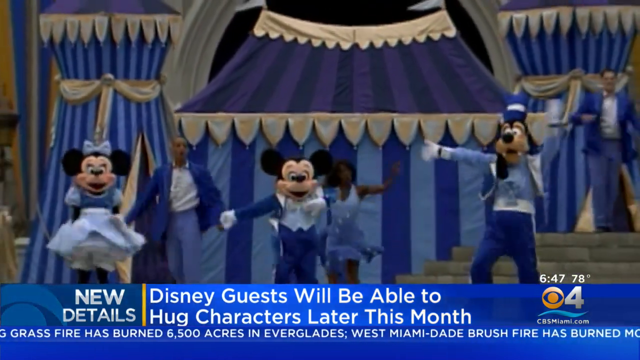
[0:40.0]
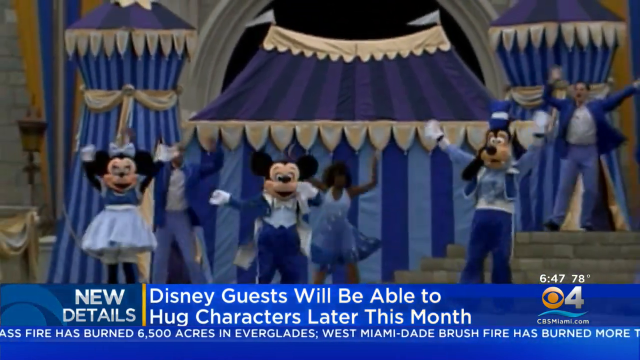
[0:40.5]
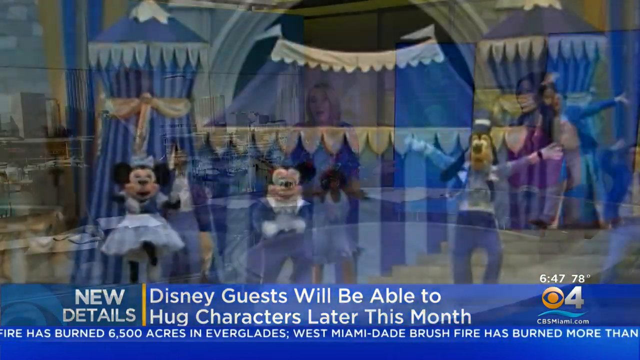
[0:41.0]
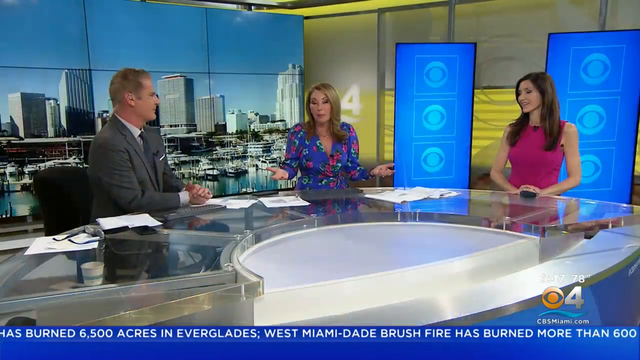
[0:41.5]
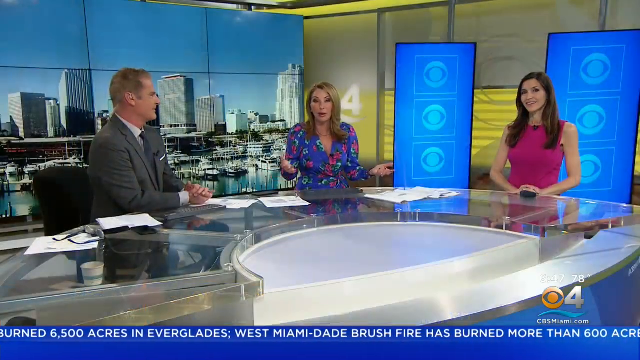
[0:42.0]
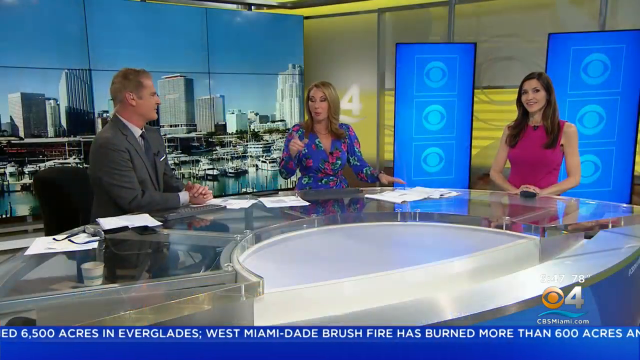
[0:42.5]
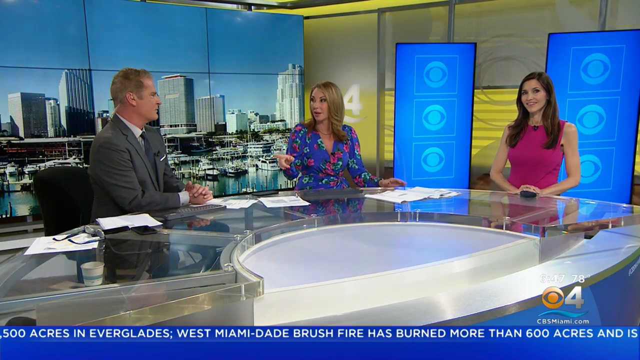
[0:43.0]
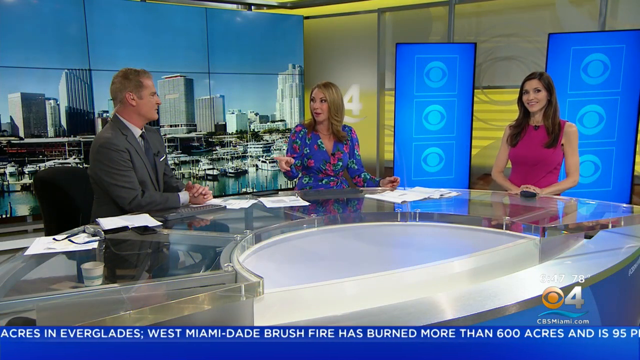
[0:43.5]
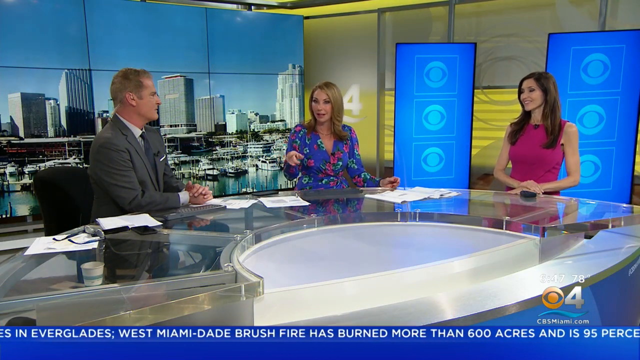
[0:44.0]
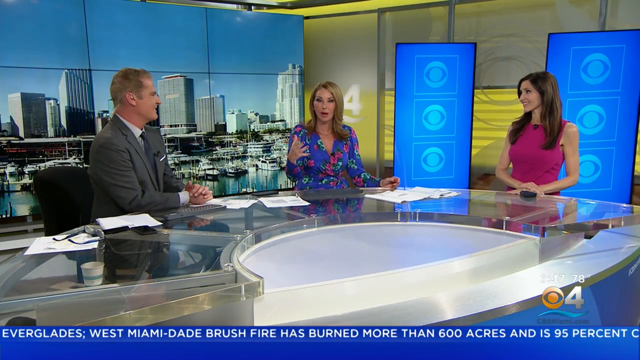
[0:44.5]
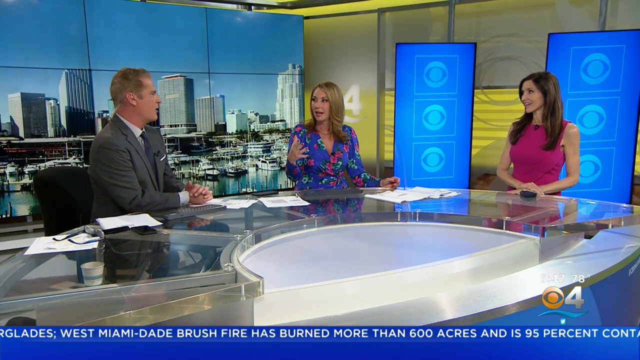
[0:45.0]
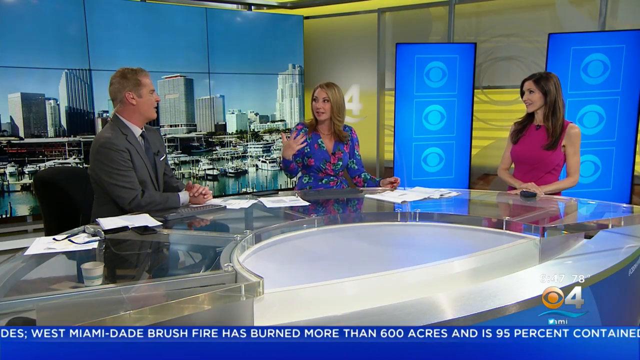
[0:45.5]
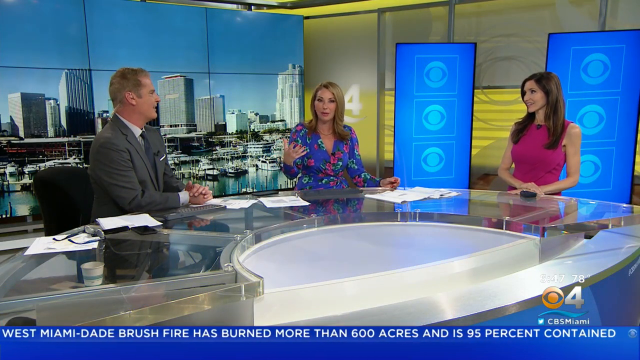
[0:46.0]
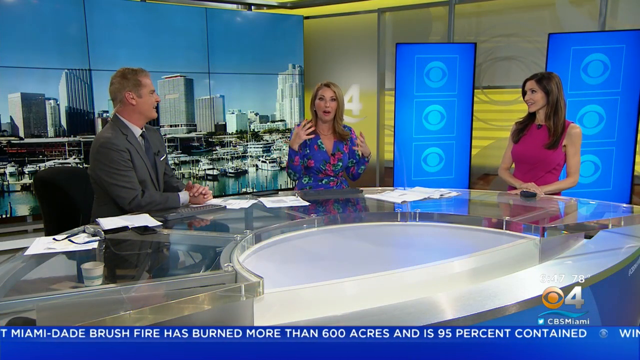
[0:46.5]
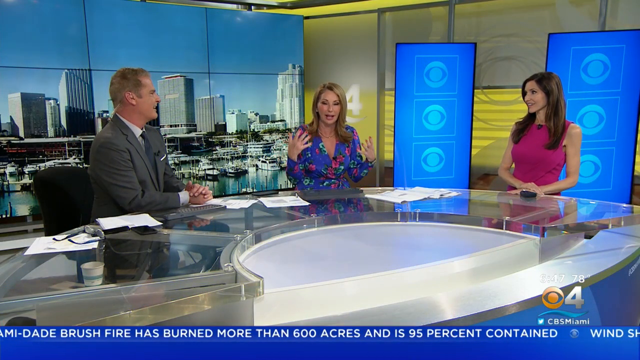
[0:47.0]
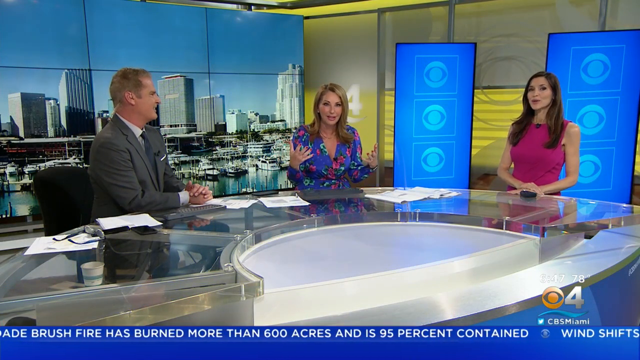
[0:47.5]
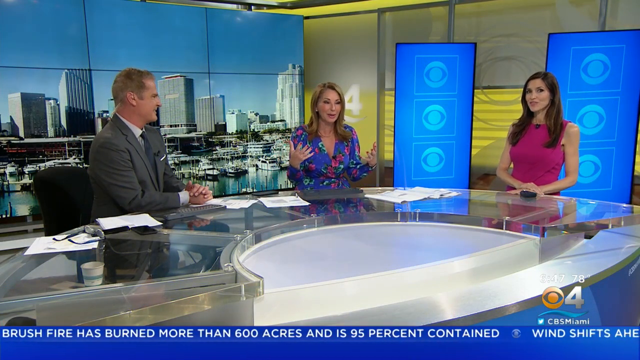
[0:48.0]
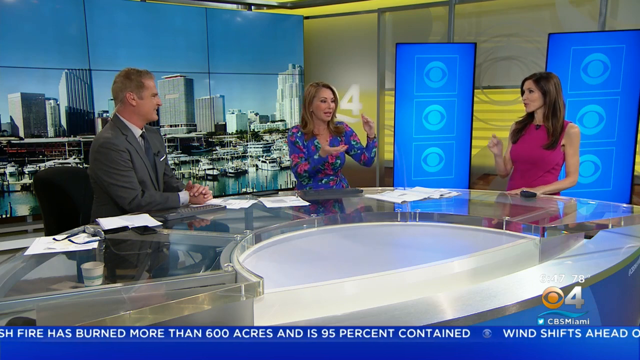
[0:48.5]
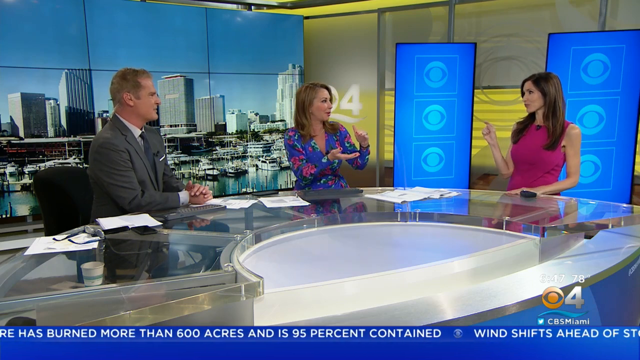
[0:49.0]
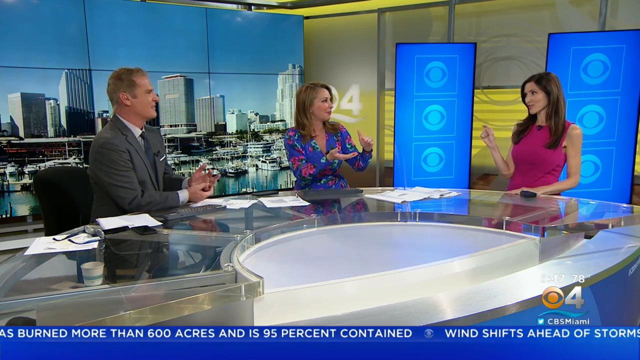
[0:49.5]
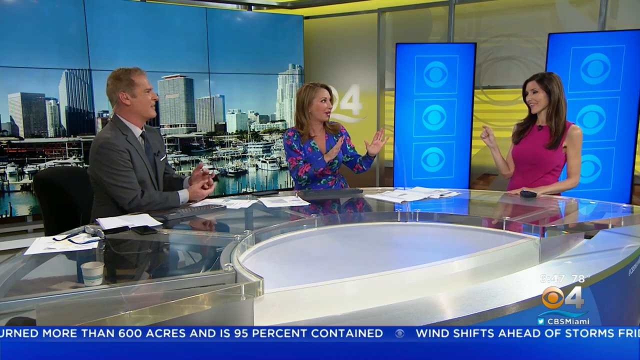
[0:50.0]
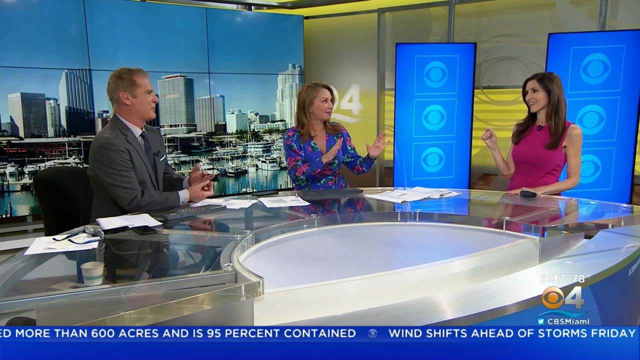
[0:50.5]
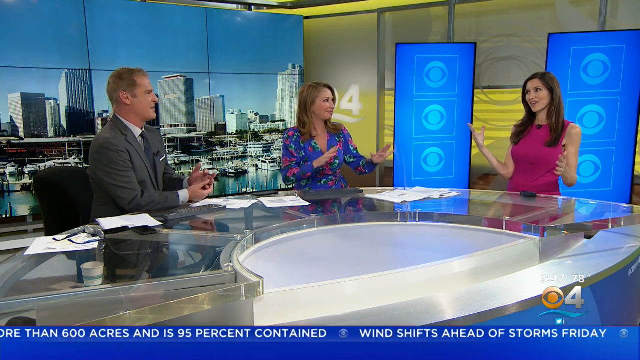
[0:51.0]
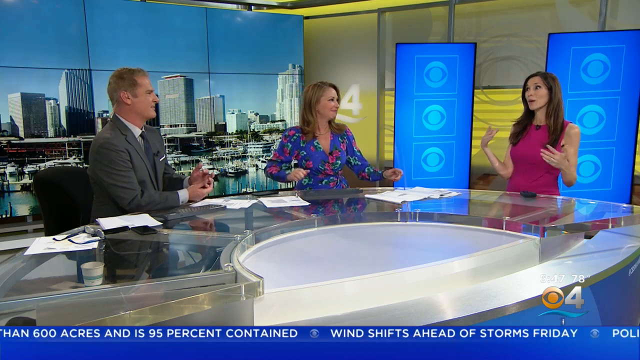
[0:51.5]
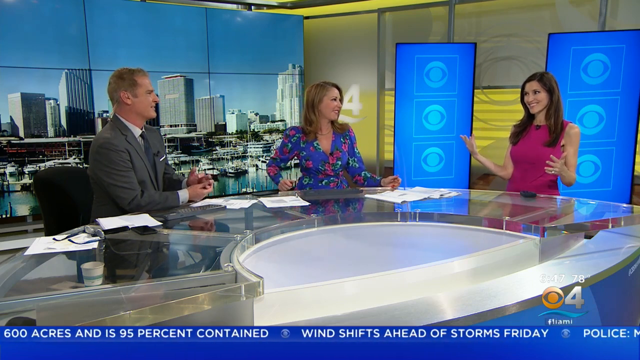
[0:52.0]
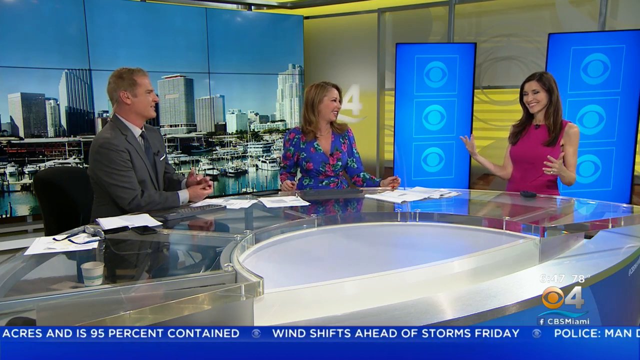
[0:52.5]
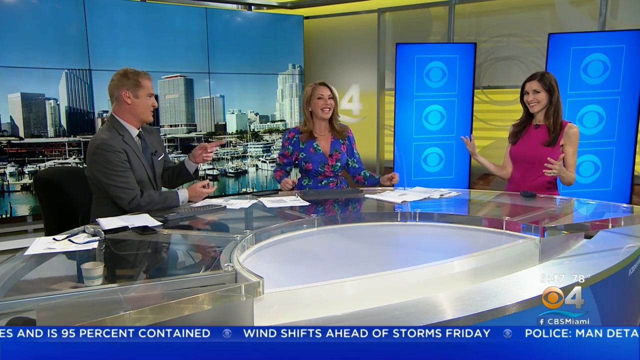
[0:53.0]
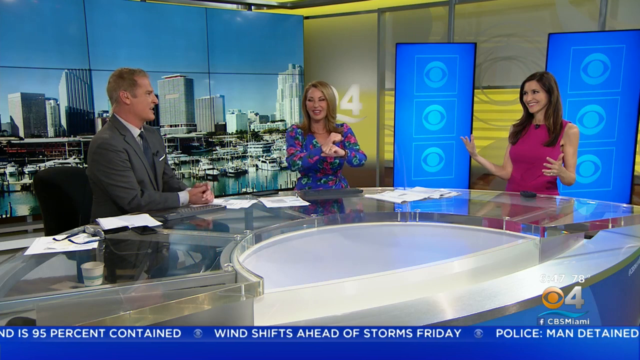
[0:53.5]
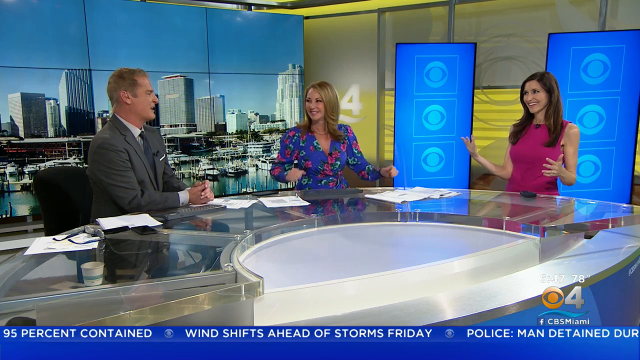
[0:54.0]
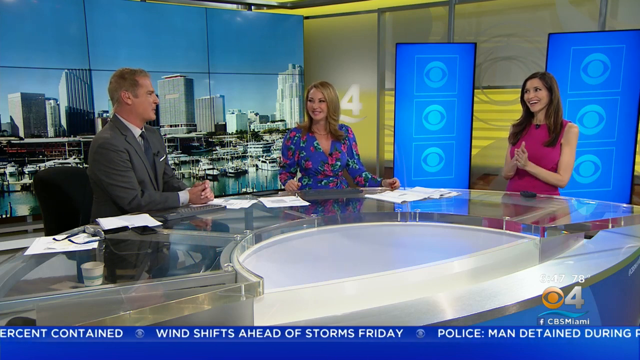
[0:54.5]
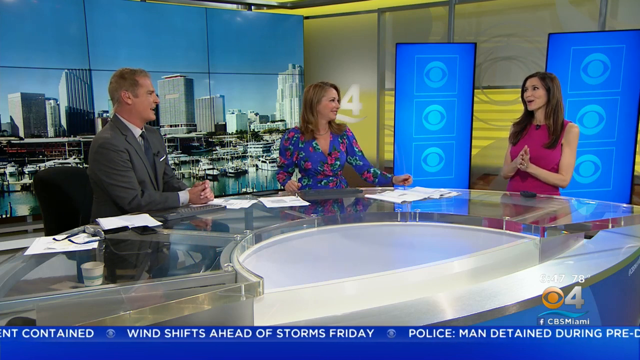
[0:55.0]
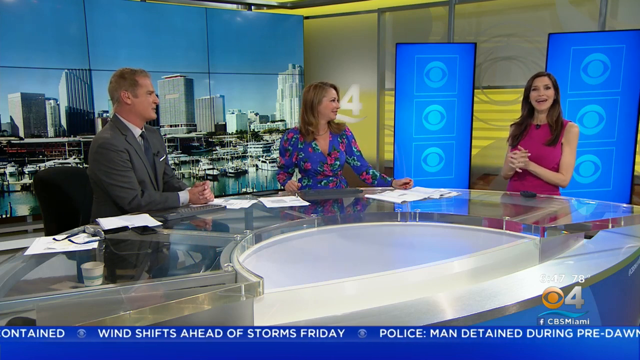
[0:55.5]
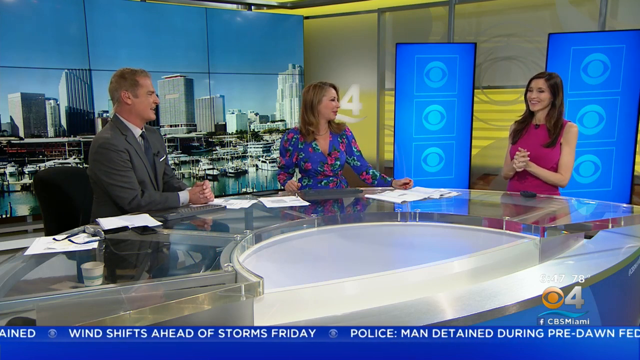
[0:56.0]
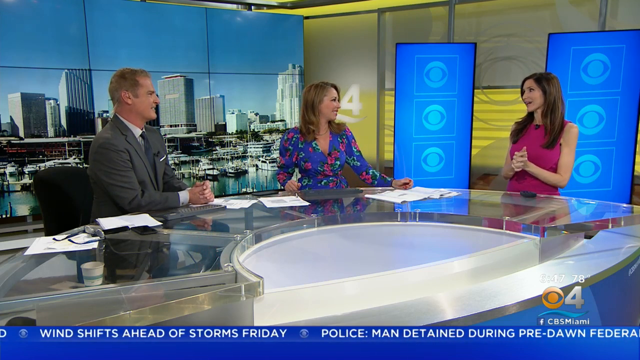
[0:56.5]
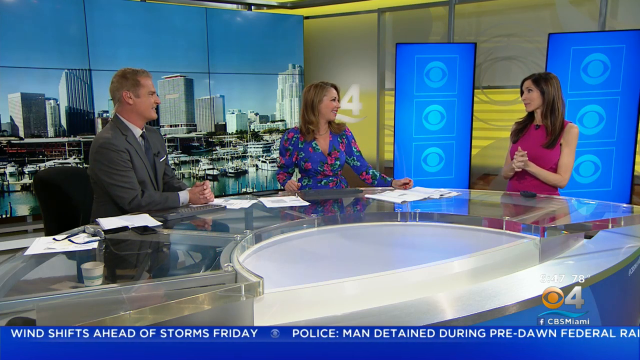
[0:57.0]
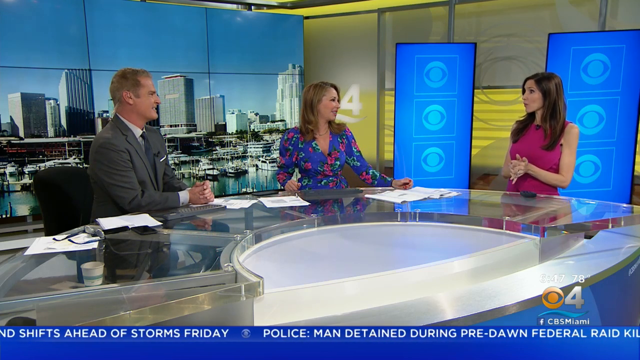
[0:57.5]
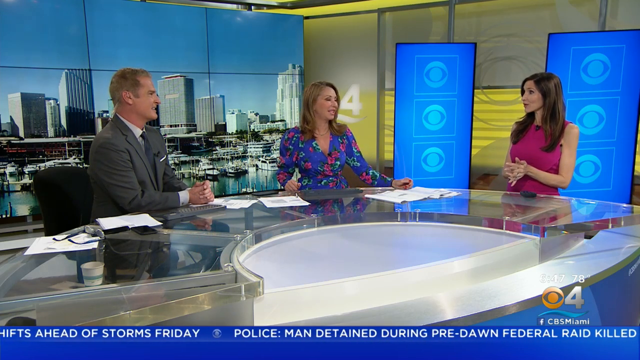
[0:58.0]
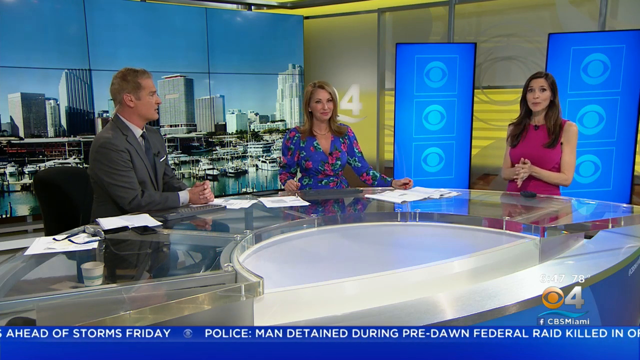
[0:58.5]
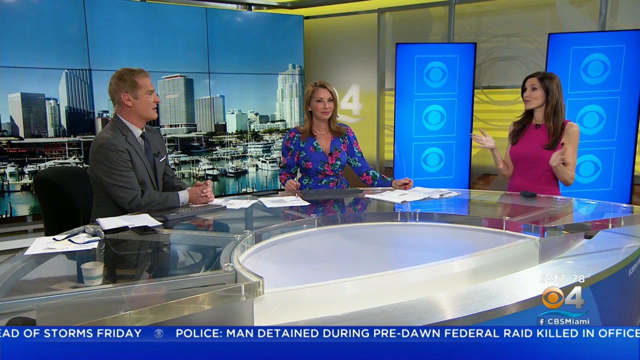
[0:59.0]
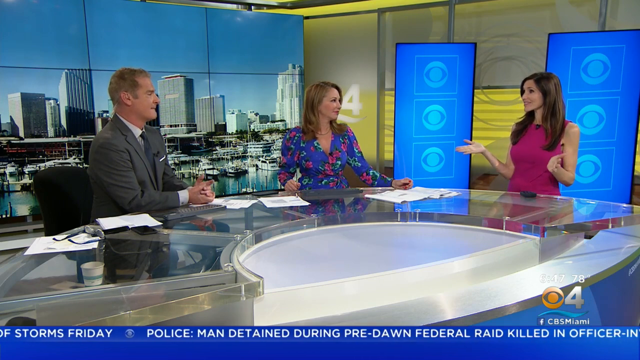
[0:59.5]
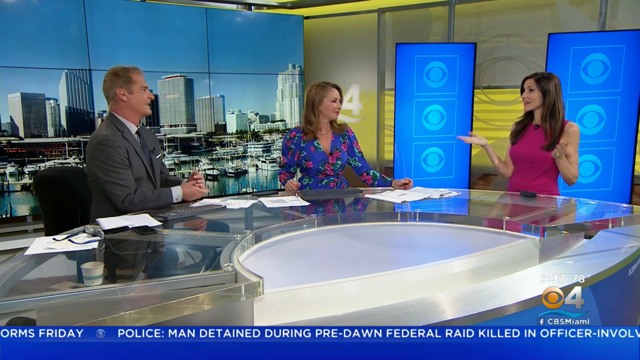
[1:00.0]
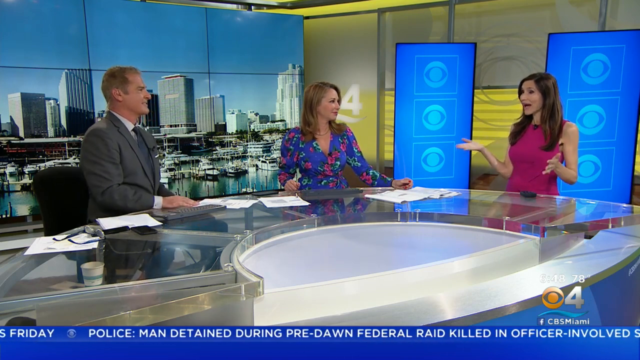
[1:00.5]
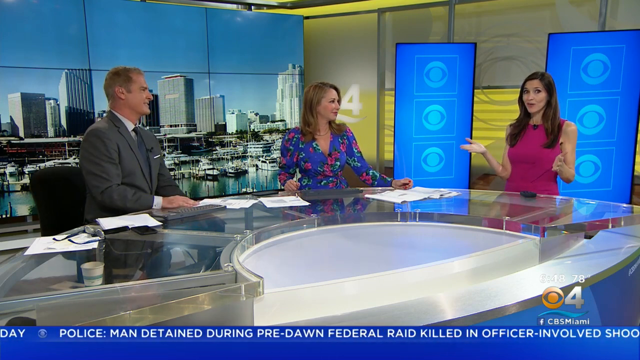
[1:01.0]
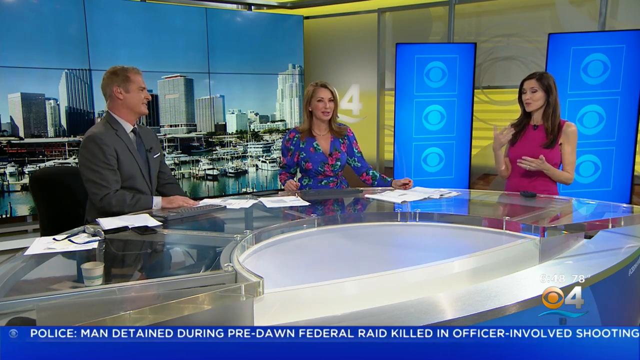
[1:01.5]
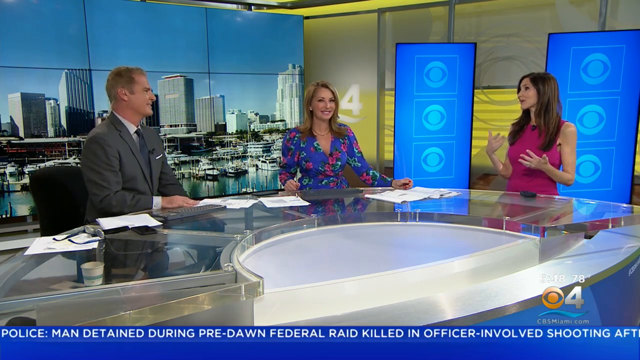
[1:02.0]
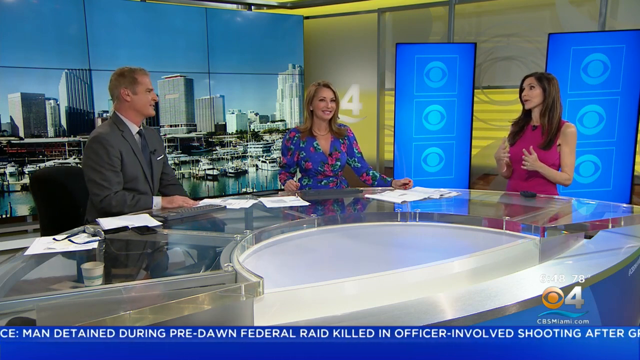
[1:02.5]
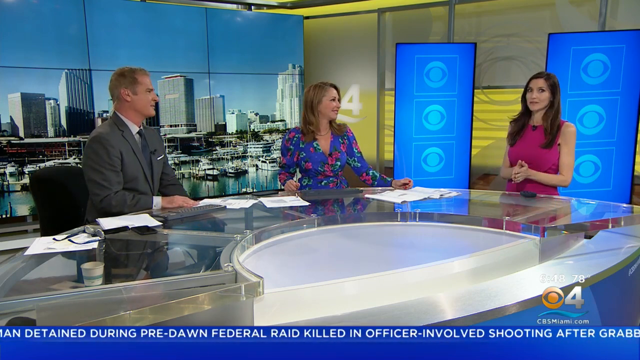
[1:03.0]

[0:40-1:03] The video returns to what appears to be the same day at the Channel 4 Miami news station. This time the shot is zoomed out: the same man is on the left, the same woman is in the center, and another woman in a sleeveless magenta dress is on the right. The man and the woman in the middle are the ones who were talking earlier. There are CBS News posters behind the woman in the magenta dress. Behind the man is a skyline representation of apparently Miami, with boats in the water in front of the buildings in what looks like a canal. The man is looking at the woman in the blue patterned dress, who has her finger pointed toward him; they appear to be talking to one another. The woman in the magenta dress, to the right of both of the others, is smiling and looking at the camera.